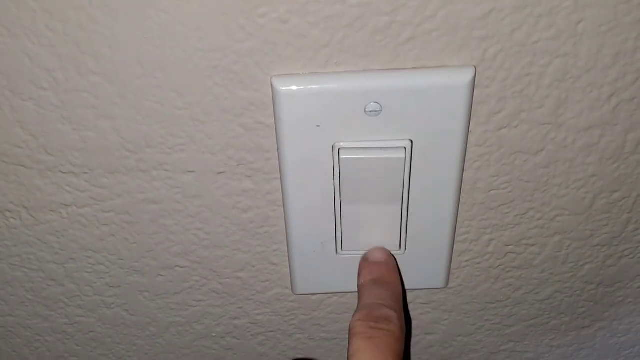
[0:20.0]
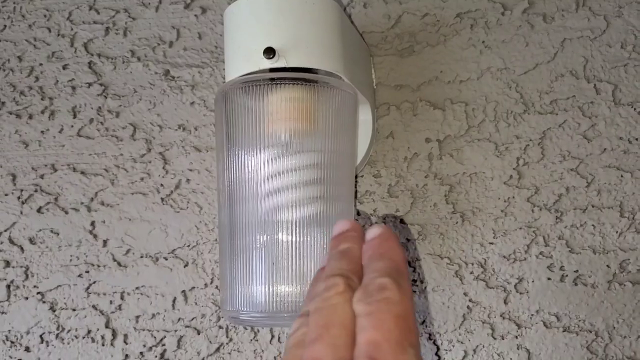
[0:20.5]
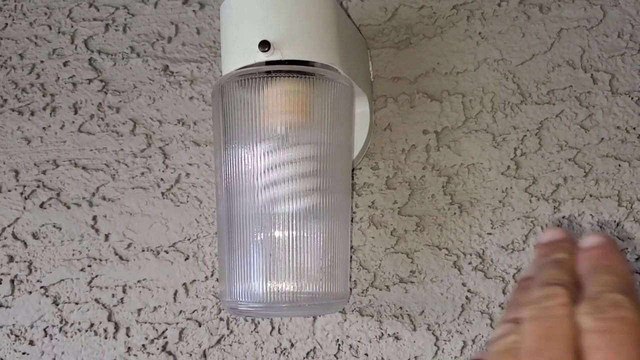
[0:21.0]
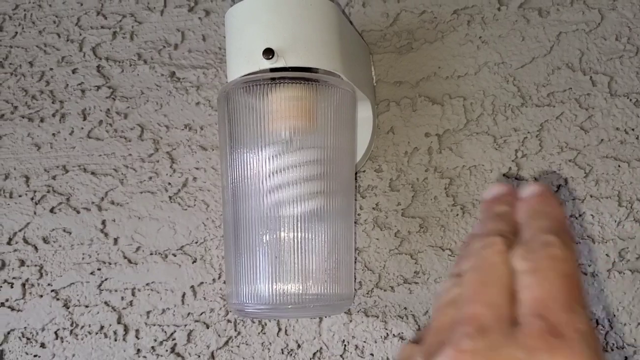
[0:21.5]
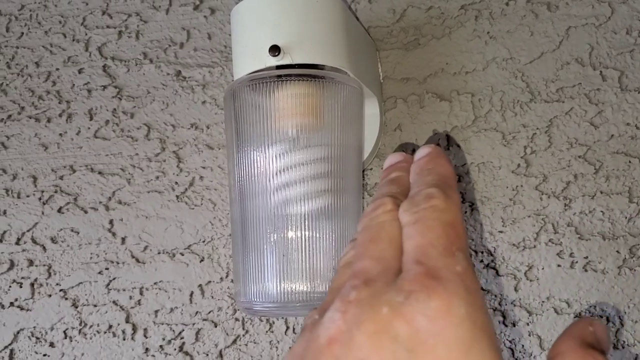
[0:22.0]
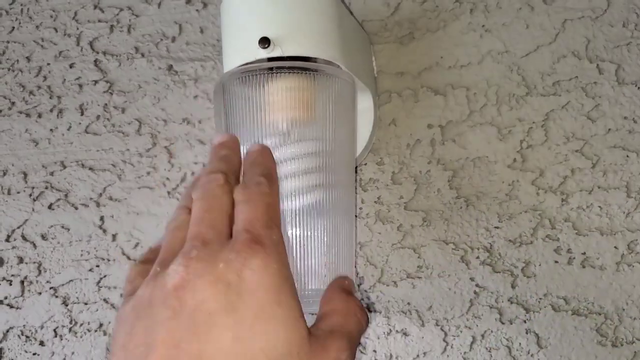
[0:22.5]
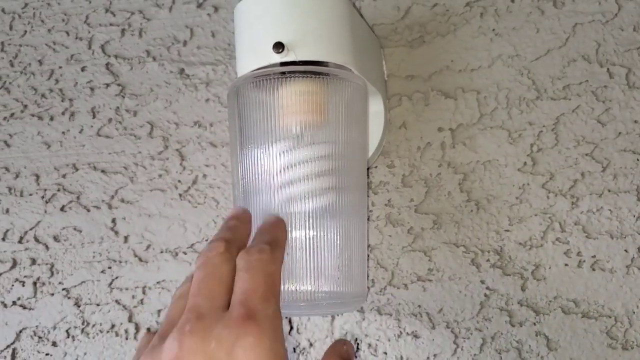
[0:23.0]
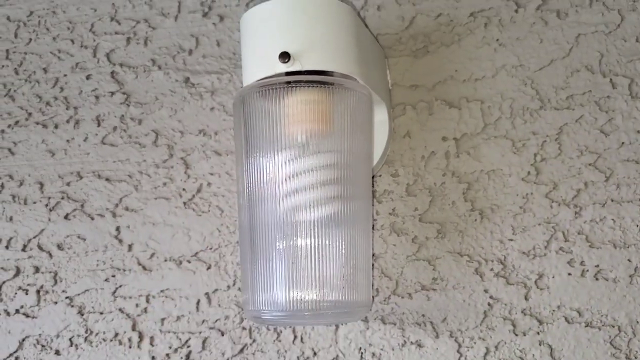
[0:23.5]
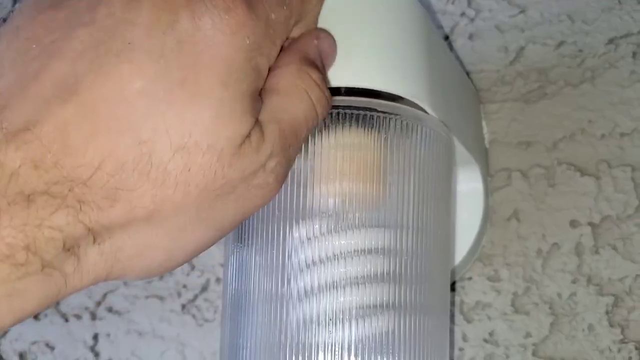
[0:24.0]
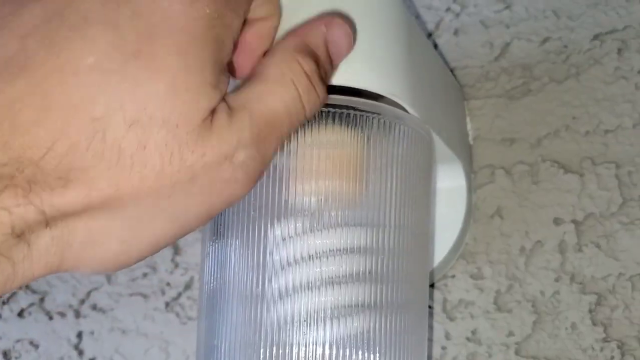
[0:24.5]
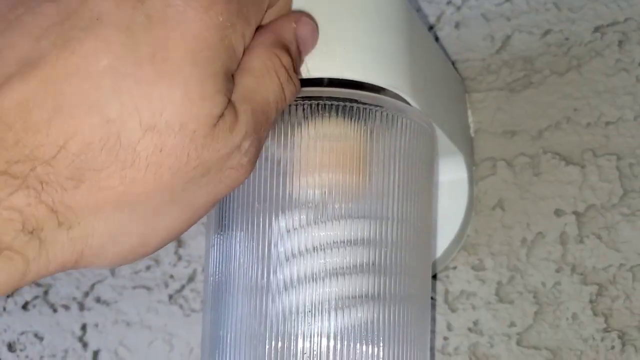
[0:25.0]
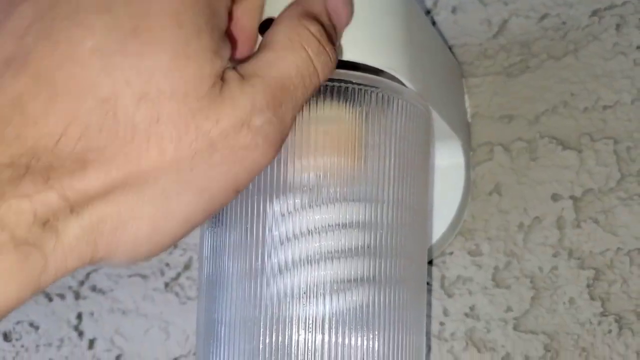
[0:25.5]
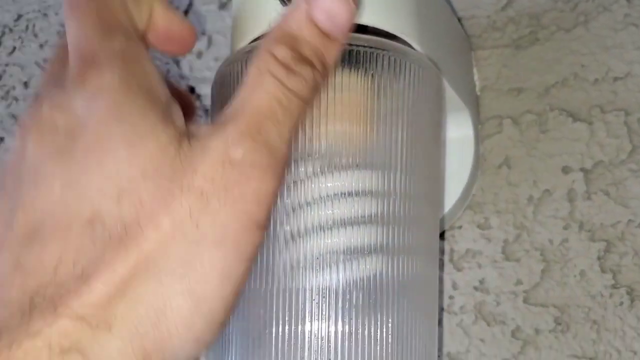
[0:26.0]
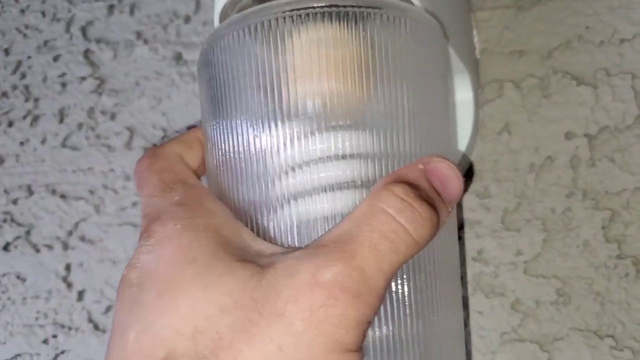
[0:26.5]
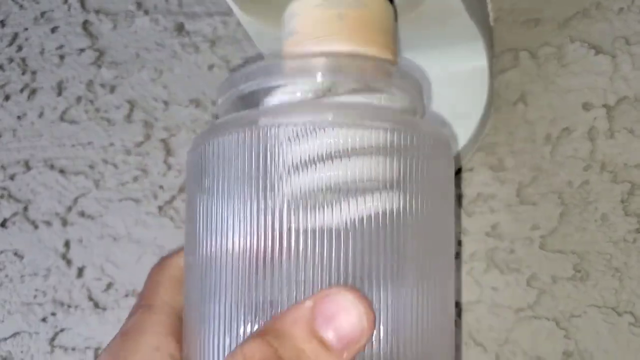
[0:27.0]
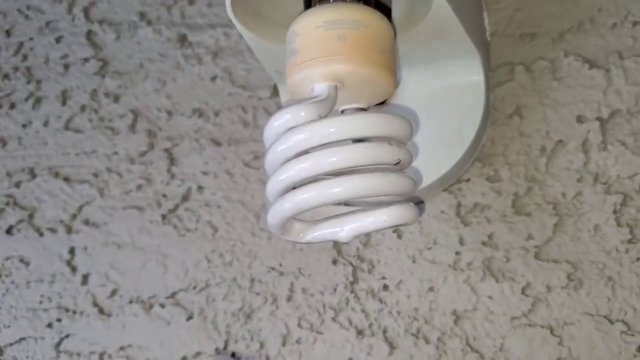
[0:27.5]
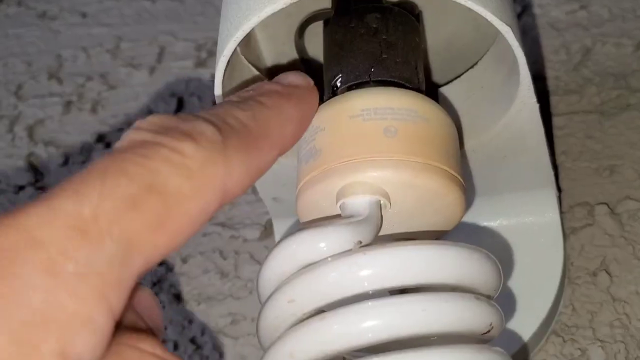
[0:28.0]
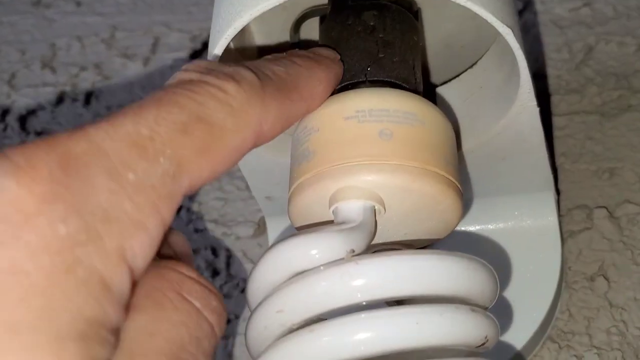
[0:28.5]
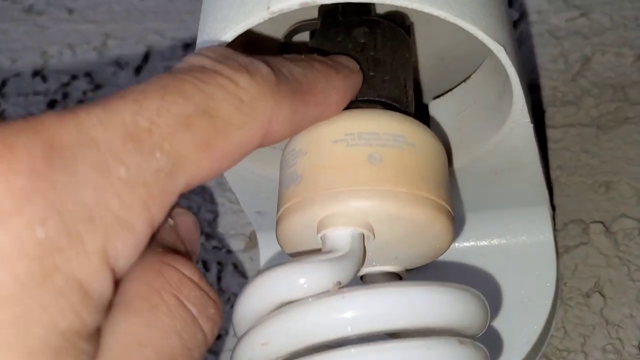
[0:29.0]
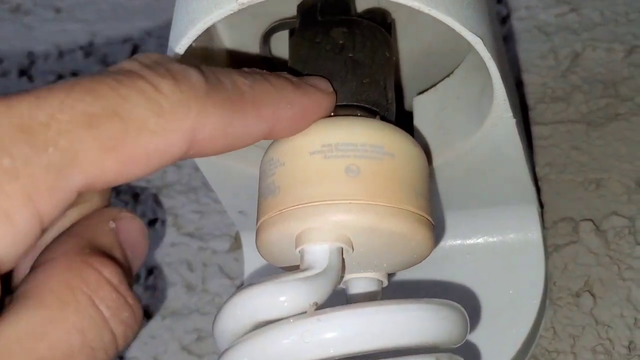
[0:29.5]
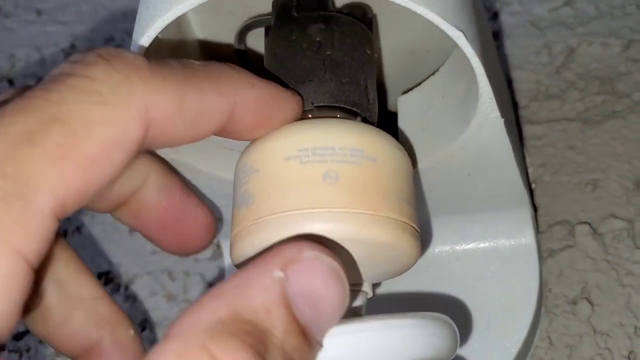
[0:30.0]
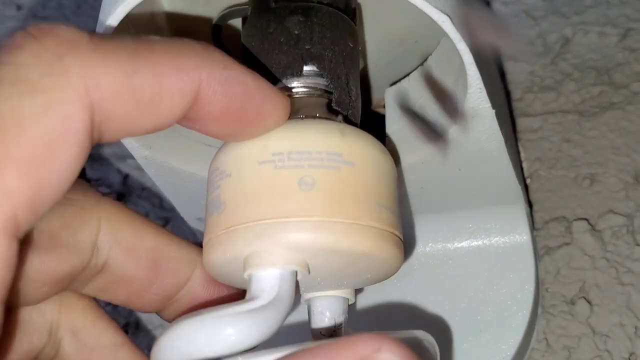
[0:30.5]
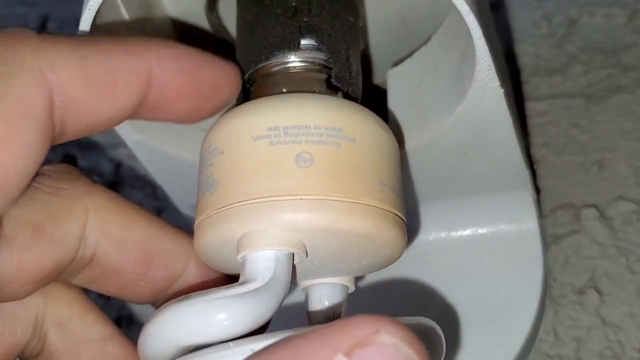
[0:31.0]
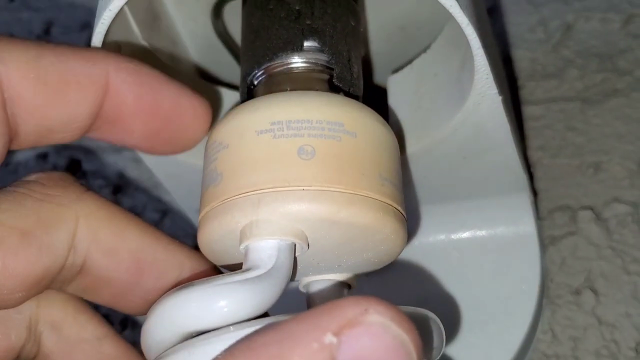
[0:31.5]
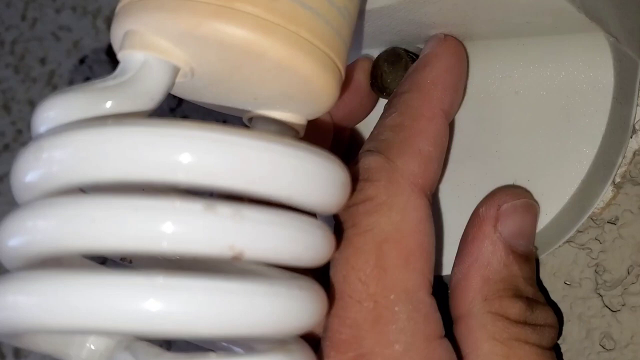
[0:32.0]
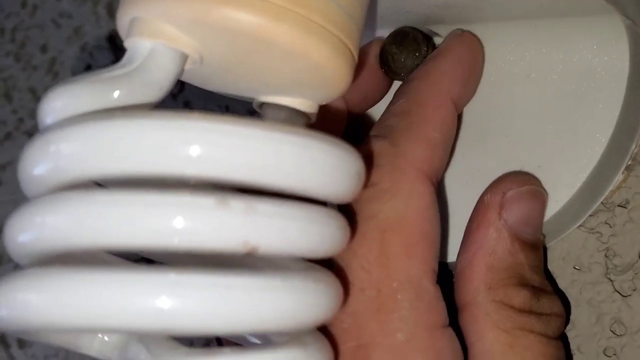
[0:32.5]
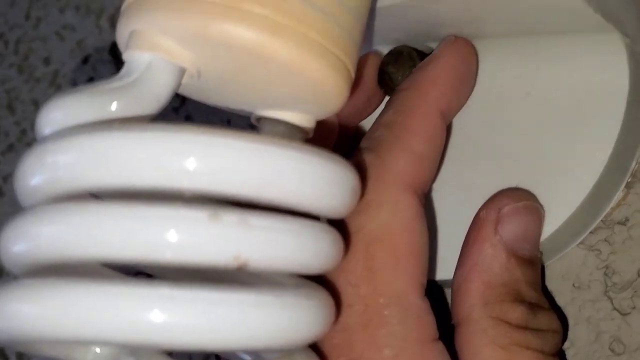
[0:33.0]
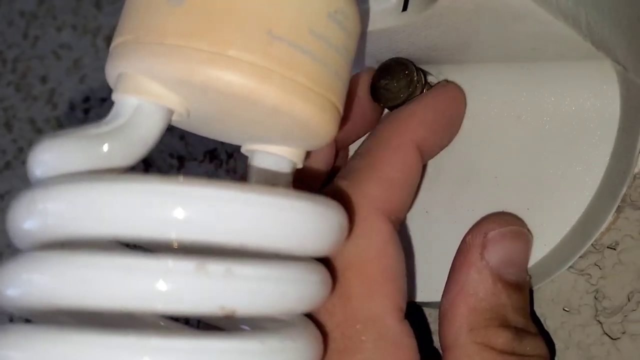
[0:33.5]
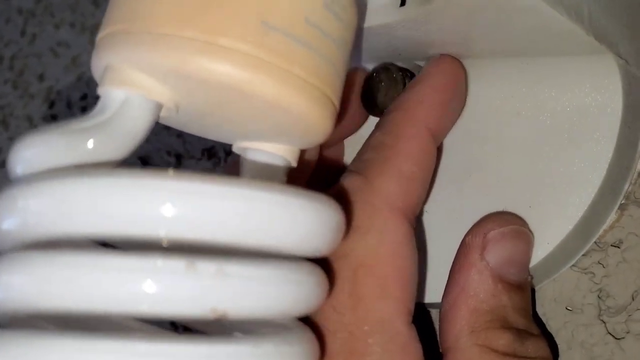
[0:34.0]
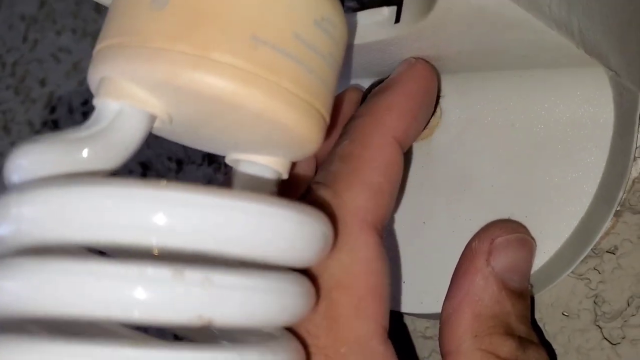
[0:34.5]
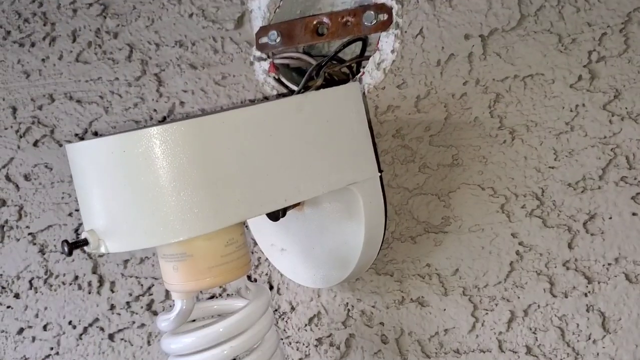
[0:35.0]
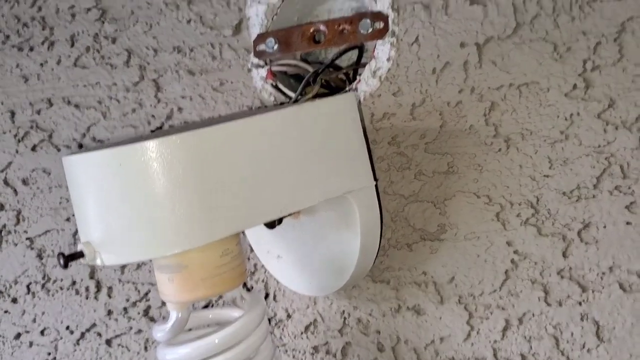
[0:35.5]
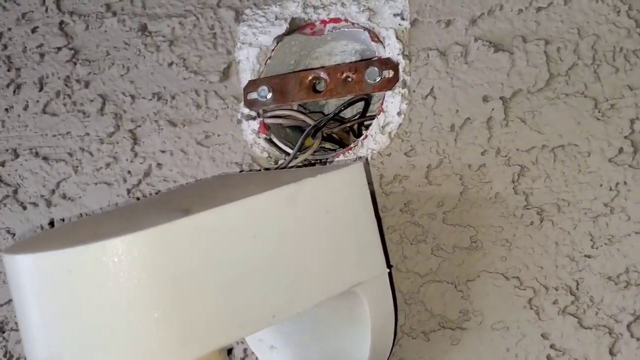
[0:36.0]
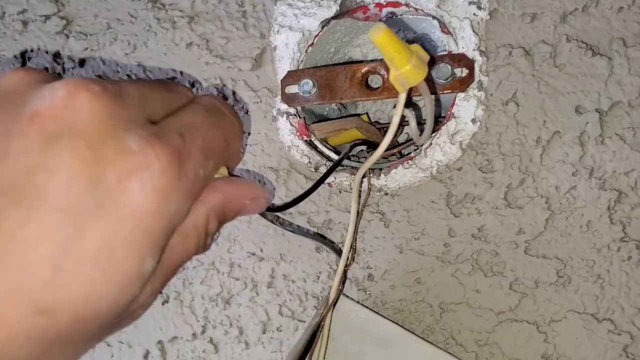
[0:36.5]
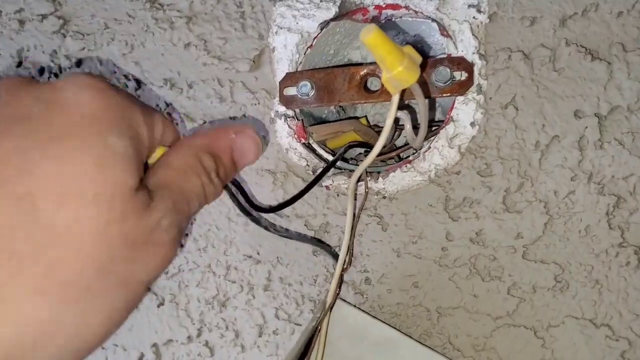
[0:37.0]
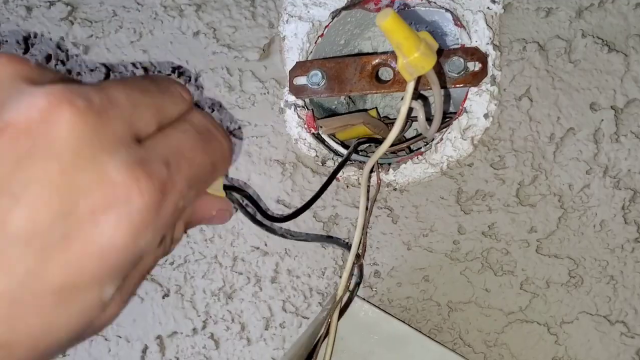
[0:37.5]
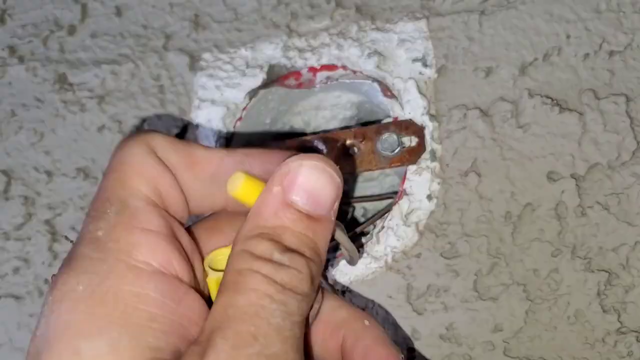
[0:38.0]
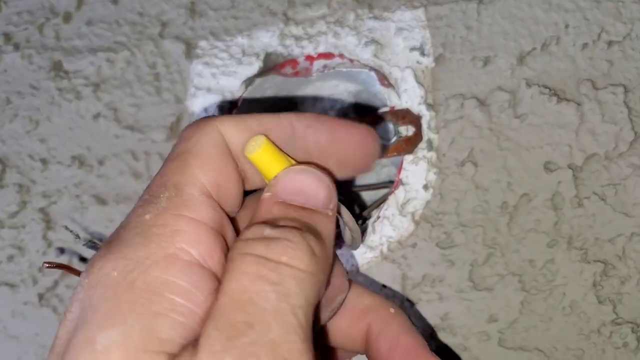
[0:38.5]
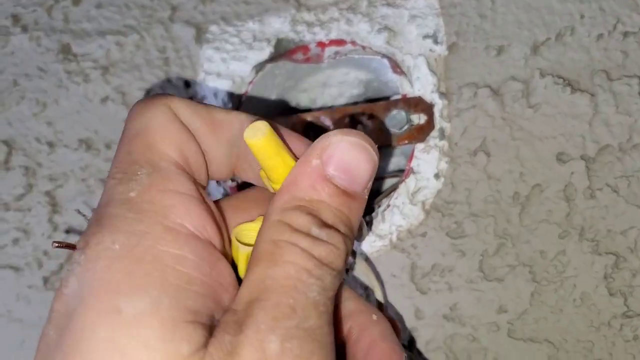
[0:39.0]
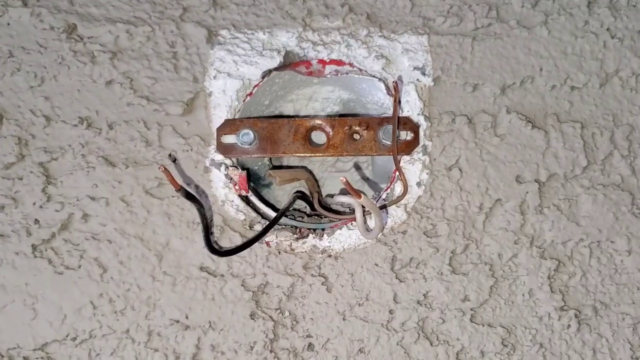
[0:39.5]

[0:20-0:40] The man appears to be unscrewing the bulb, probably removing it; the bulb looks very worn out. He takes it off the wall, then disconnects the cables, removing the cable plugs. The old bulb looks very old, and it wears off as soon as he holds it. He appears to be changing the bulb.